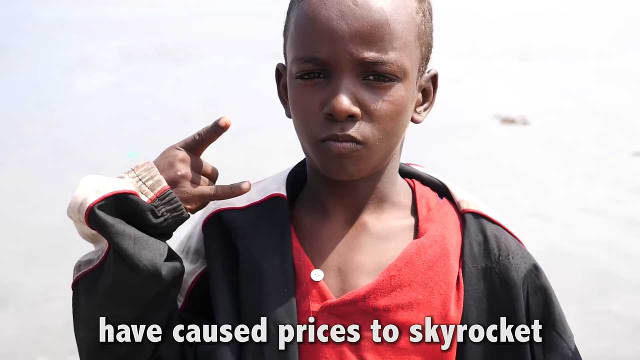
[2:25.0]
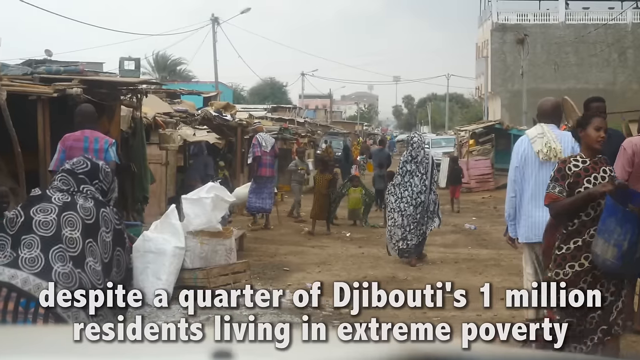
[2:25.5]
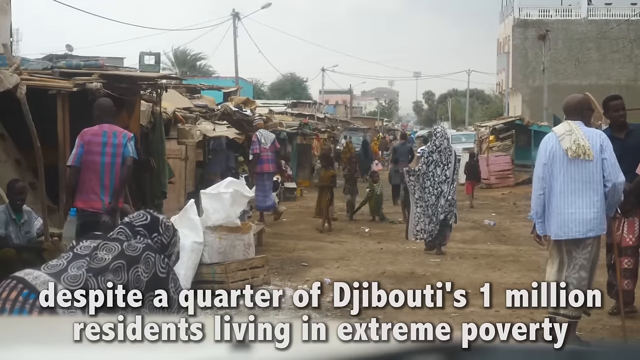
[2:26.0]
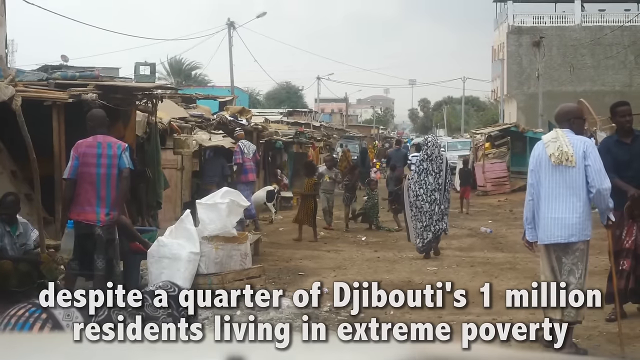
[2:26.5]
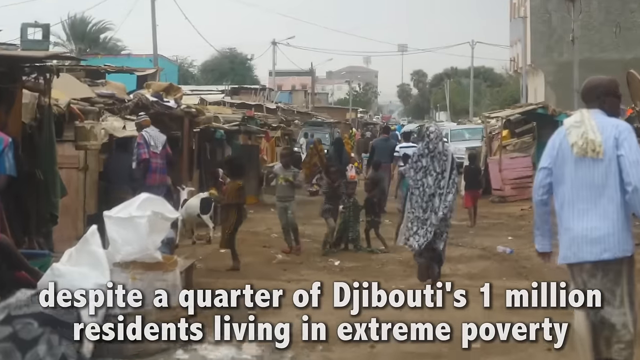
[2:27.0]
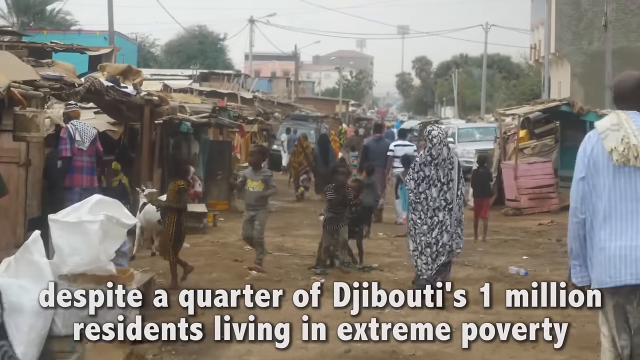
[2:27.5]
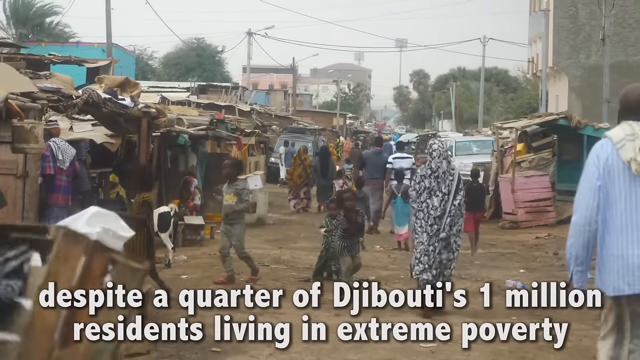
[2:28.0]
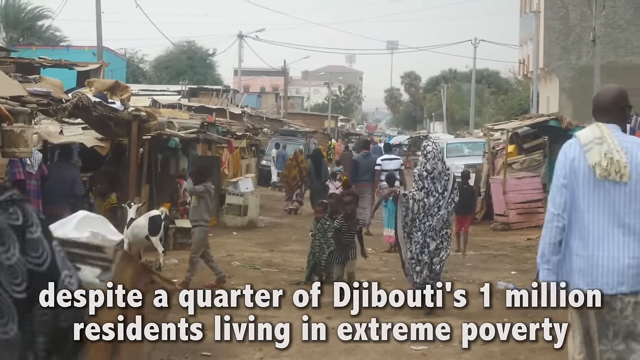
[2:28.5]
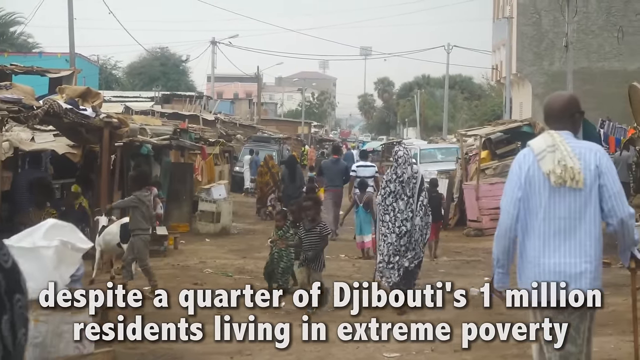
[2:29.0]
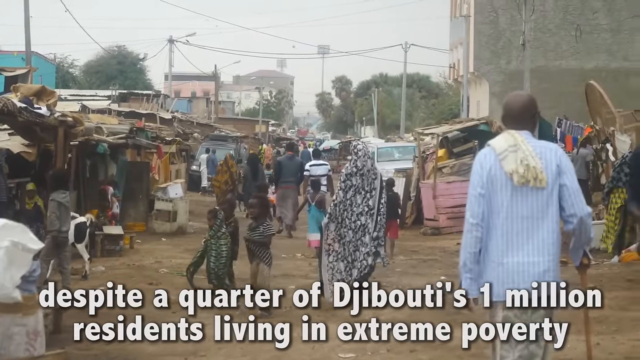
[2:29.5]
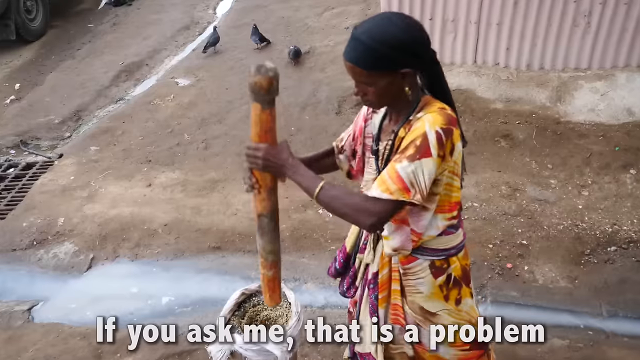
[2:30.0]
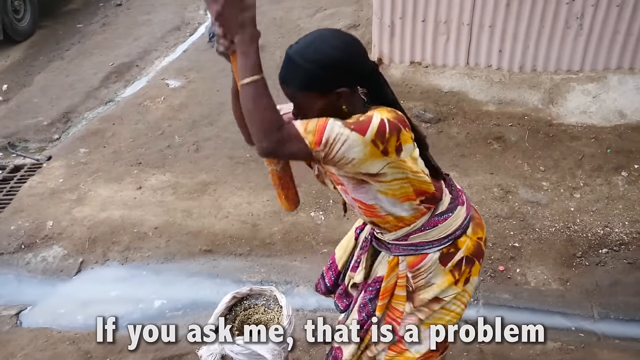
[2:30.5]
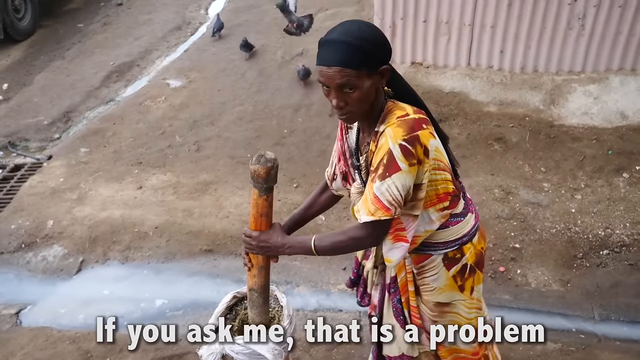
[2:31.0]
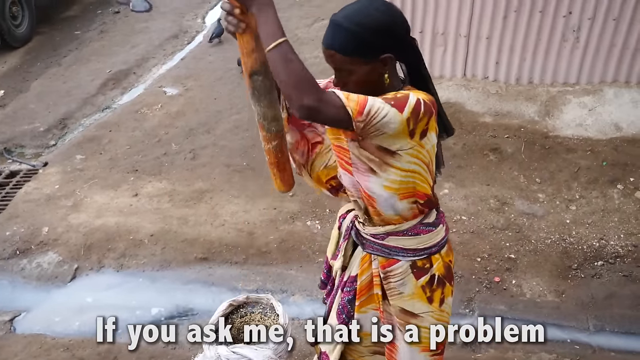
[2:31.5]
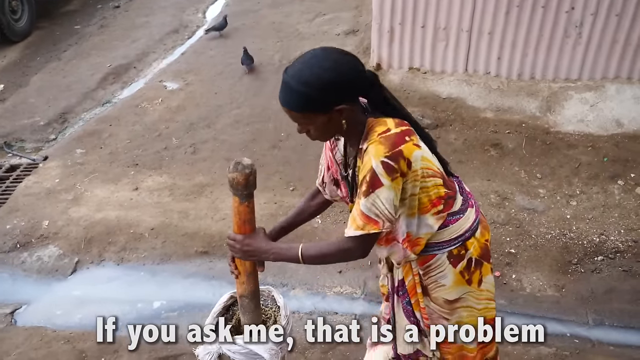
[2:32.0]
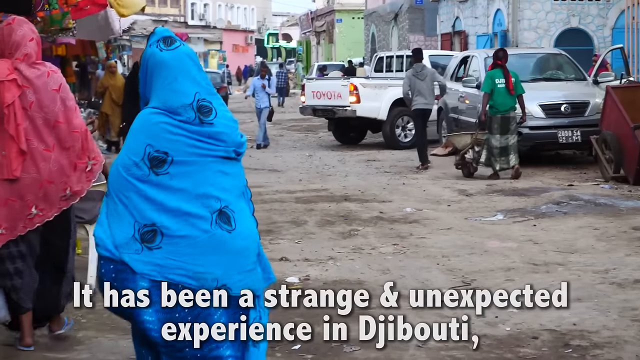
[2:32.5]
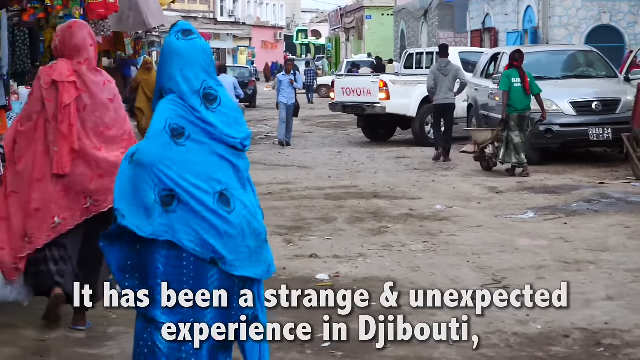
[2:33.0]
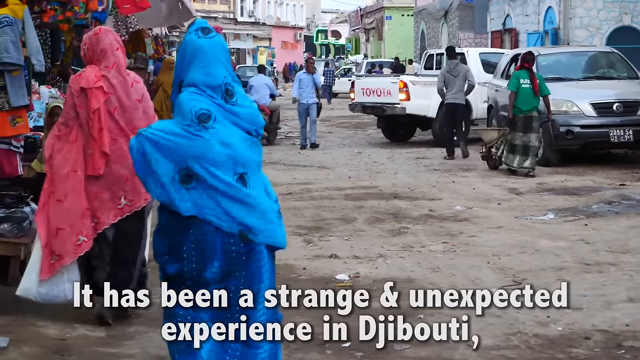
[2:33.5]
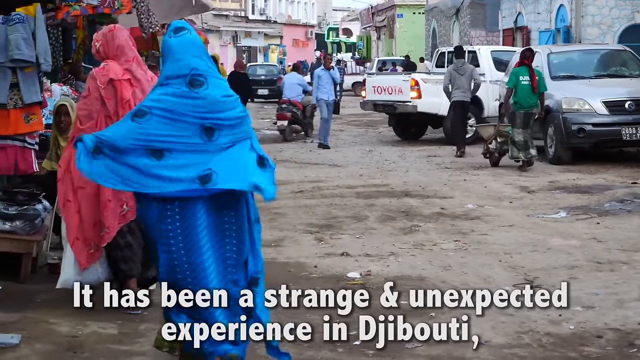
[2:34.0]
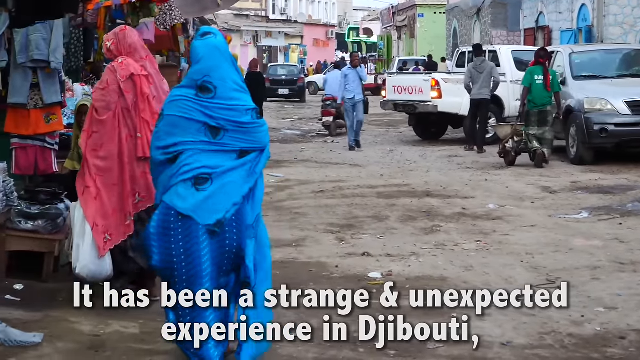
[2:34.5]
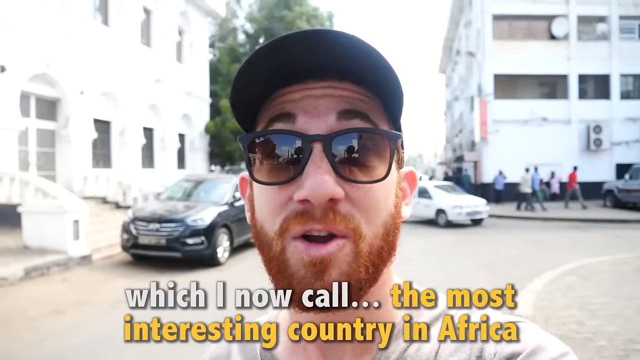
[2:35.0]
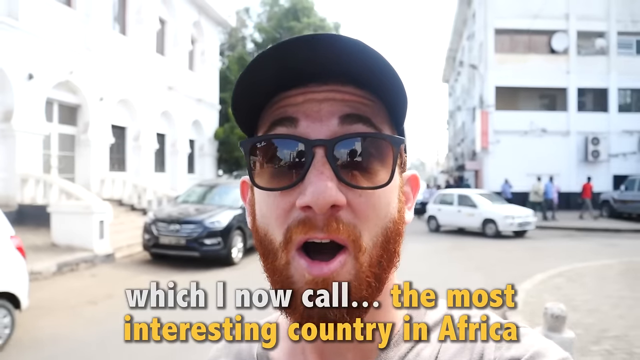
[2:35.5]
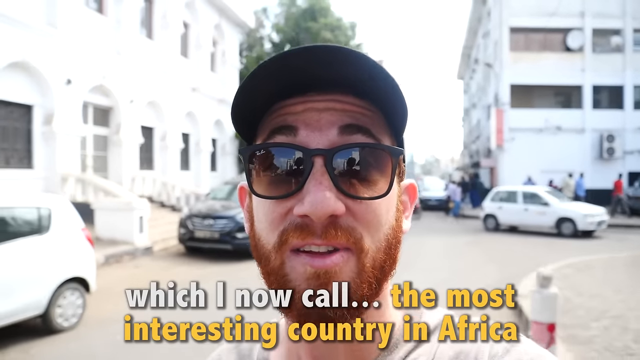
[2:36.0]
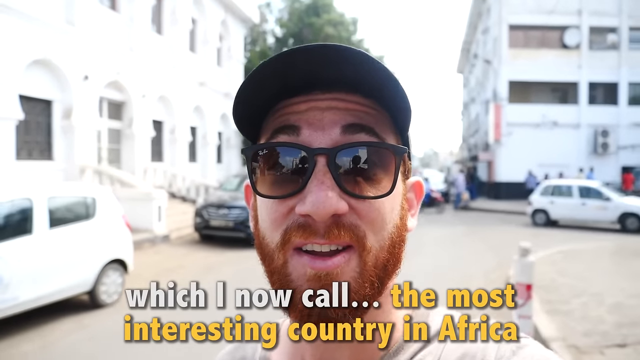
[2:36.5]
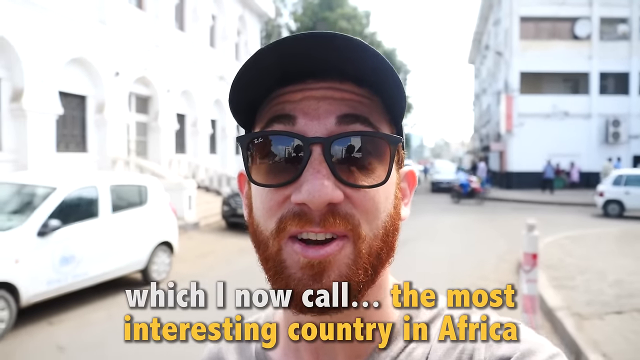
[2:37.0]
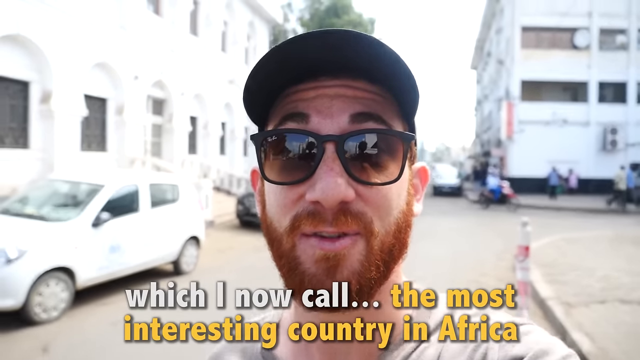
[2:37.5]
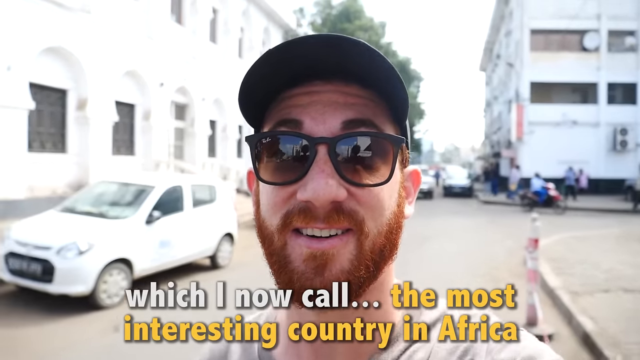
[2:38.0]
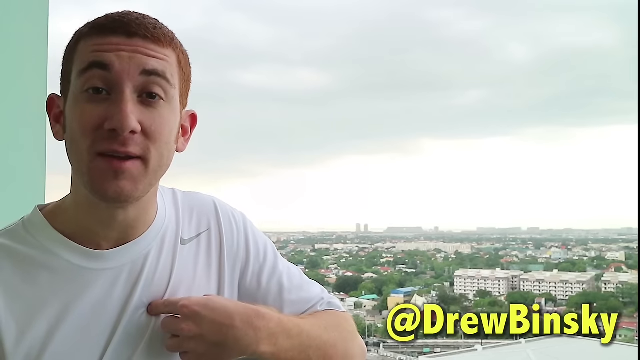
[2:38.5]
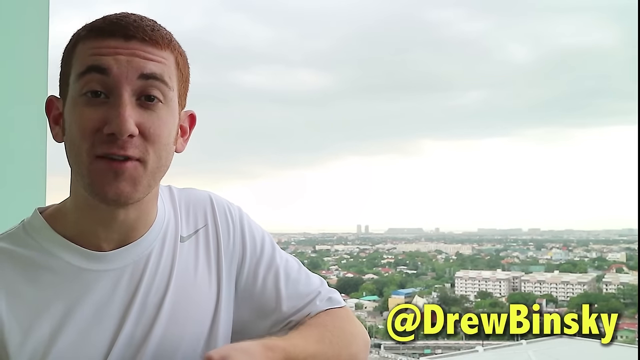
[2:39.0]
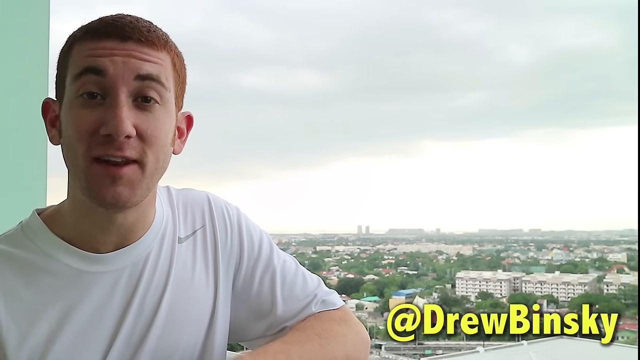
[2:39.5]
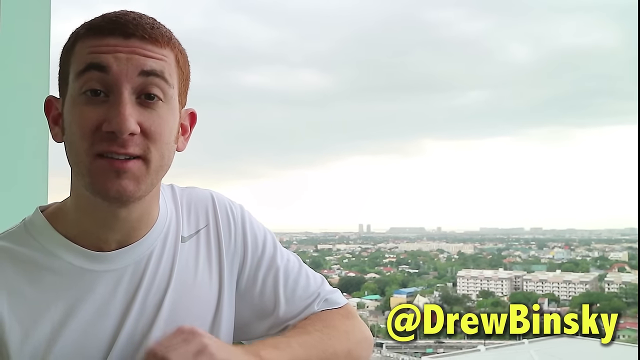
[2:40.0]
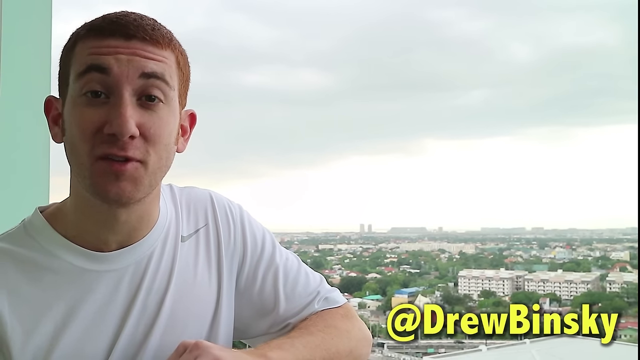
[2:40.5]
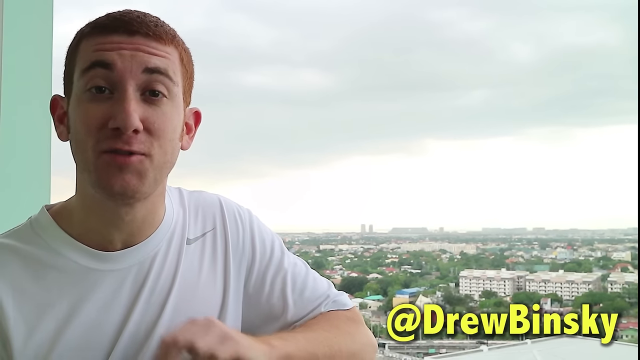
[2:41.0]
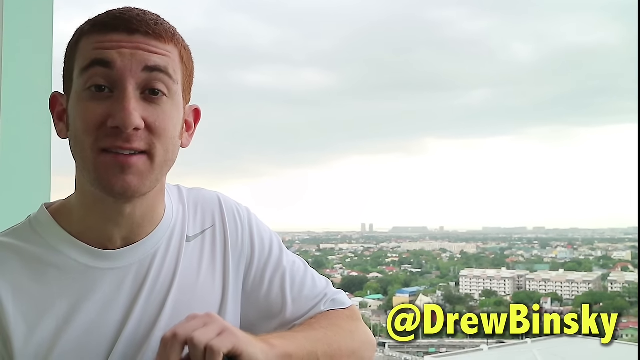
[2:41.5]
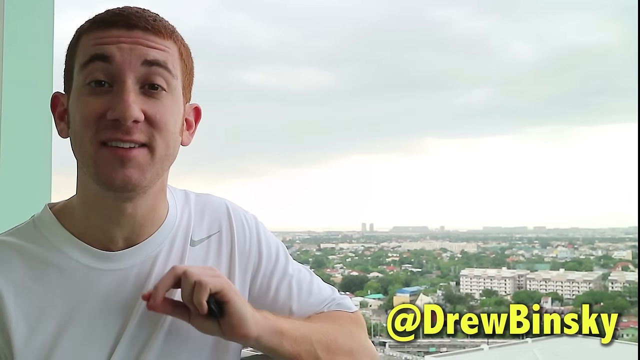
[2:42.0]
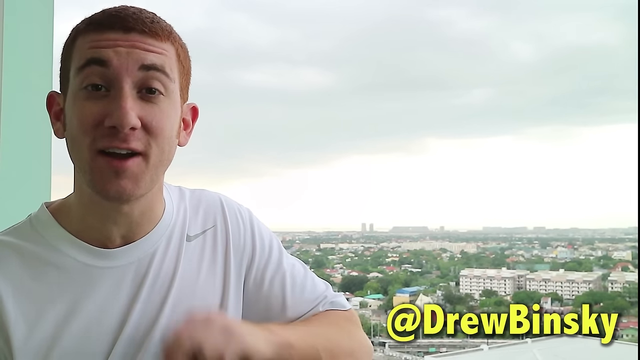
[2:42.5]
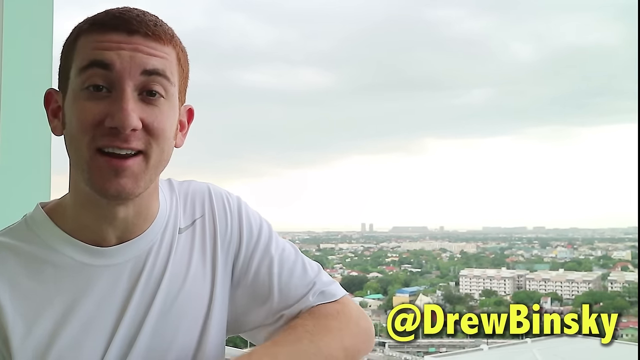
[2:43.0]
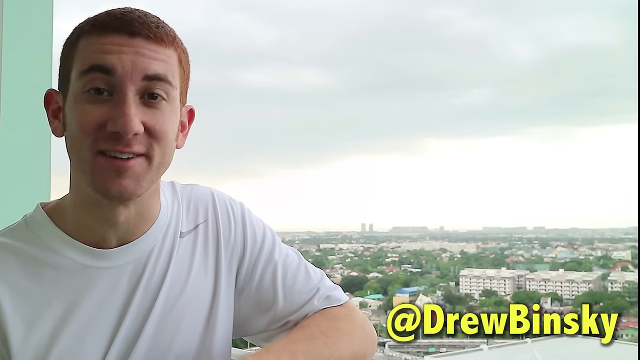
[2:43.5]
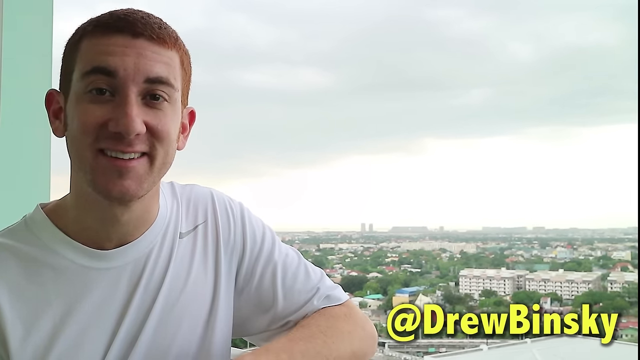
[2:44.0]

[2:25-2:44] Text calls Djibouti the most interesting country in Africa, mentions one million residents living in extreme poverty, and says it has been a strange and unexpected experience in Djibouti. Kids are in the dirty streets and people walk up and down the alleyways. A woman mixes something in a bucket with a long log-like tool, as if mashing something; she wears a colorful dress and a black headdress covering her hair. Pigeons are near her. The man, Drew Binsky, still wears the same gray t-shirt with a hat and sunglasses.